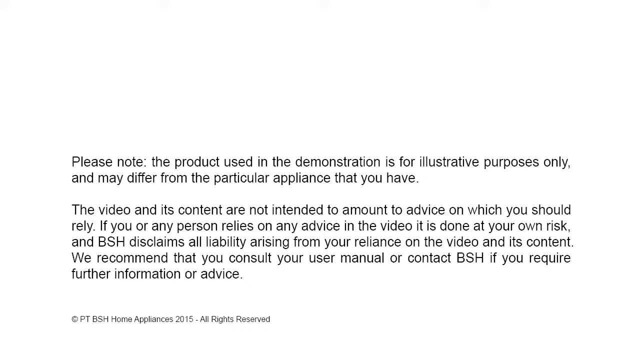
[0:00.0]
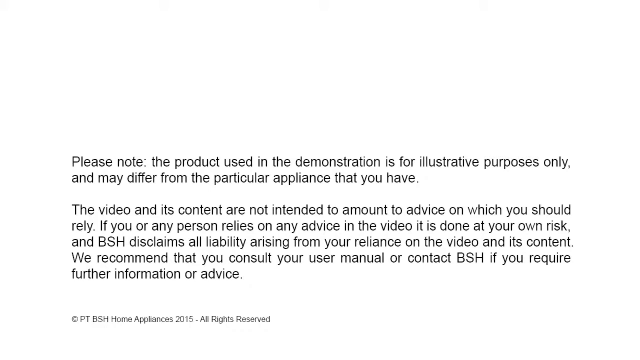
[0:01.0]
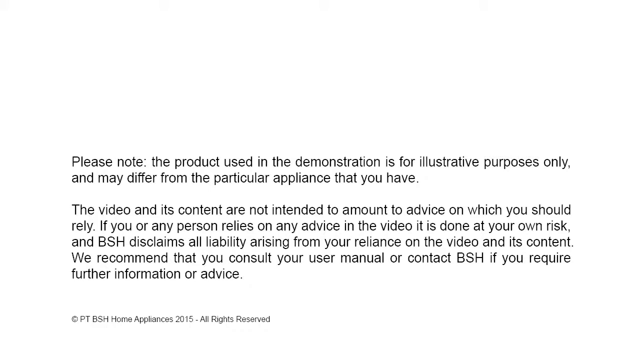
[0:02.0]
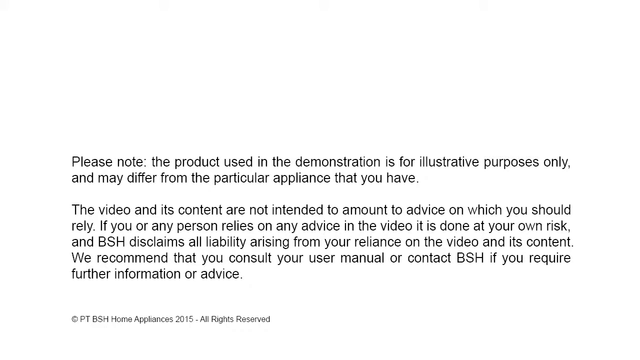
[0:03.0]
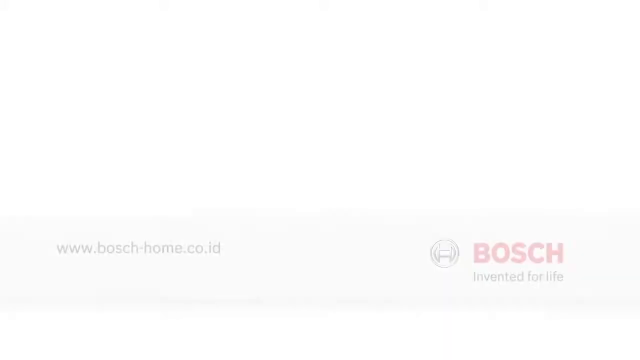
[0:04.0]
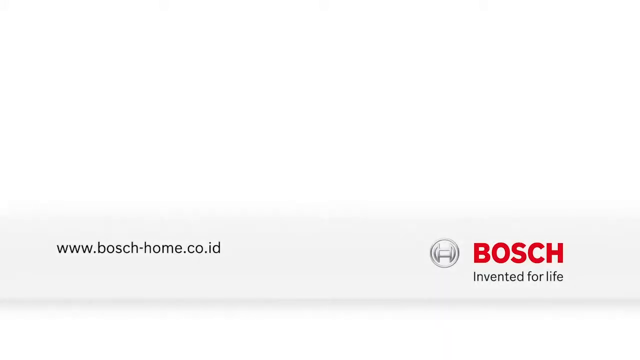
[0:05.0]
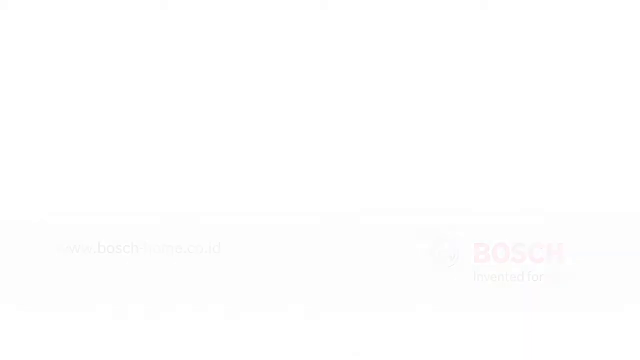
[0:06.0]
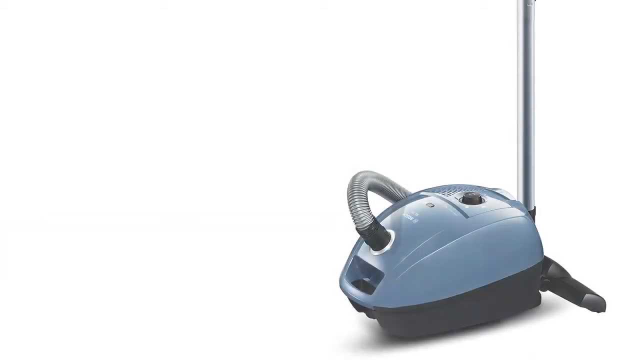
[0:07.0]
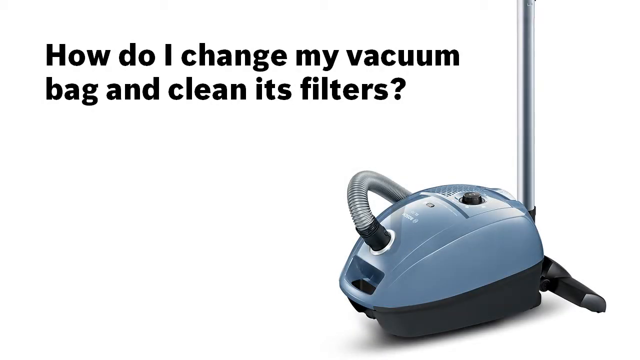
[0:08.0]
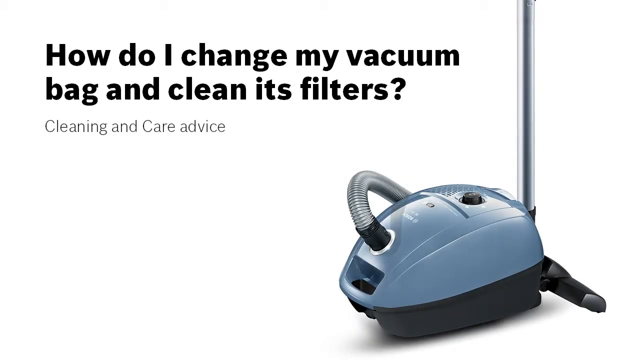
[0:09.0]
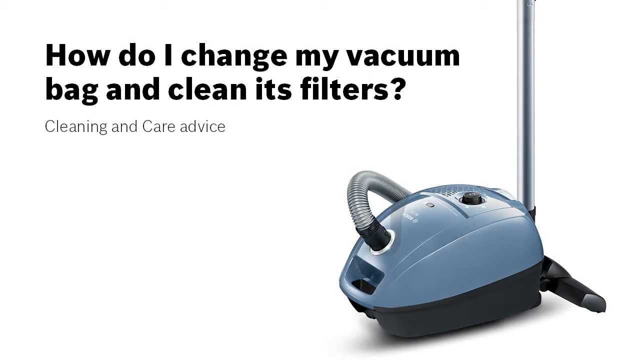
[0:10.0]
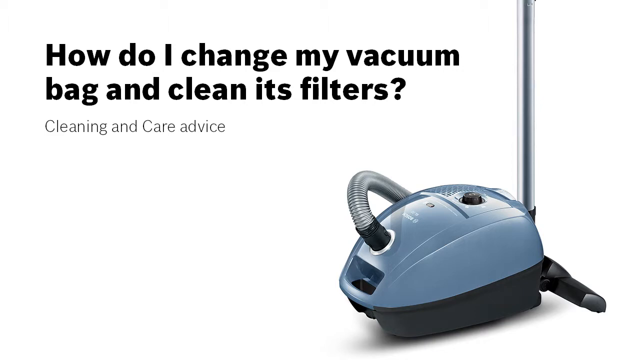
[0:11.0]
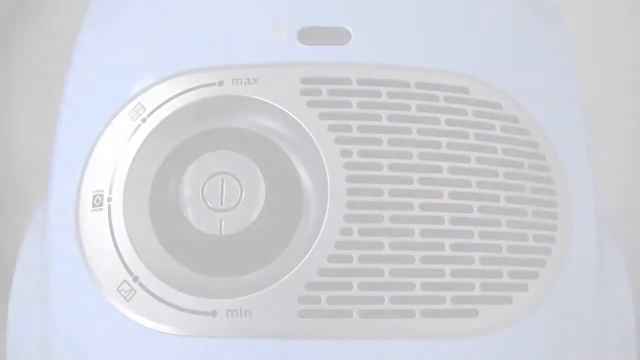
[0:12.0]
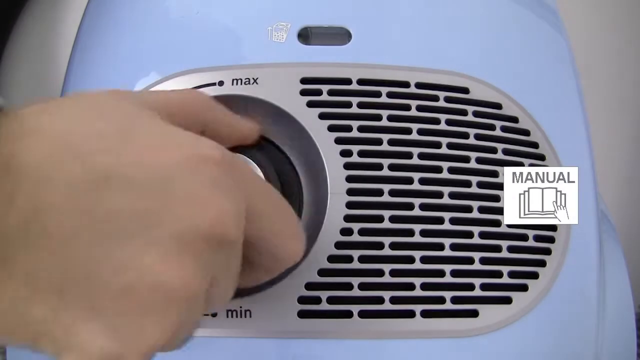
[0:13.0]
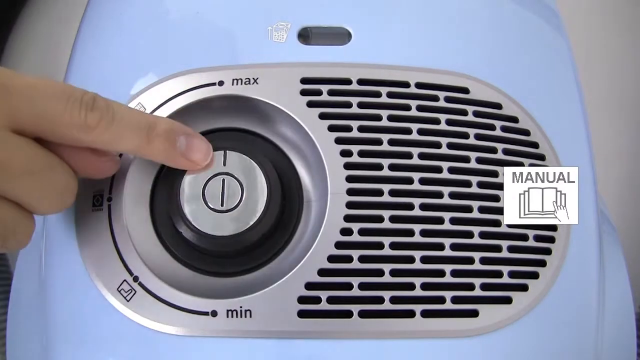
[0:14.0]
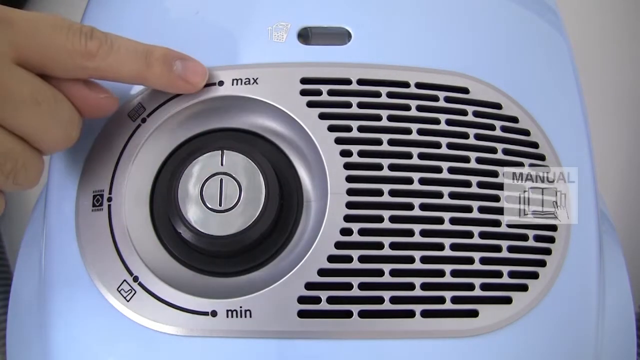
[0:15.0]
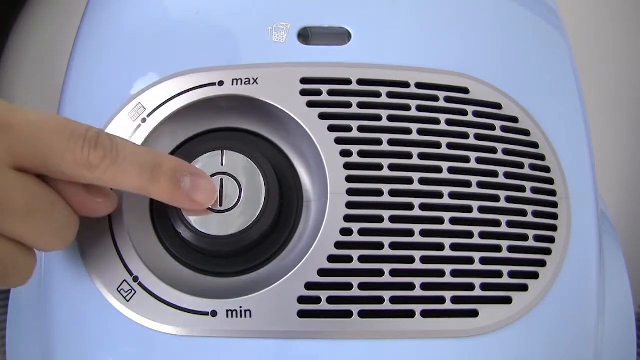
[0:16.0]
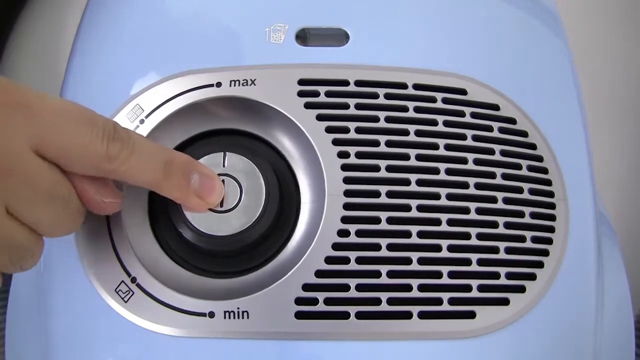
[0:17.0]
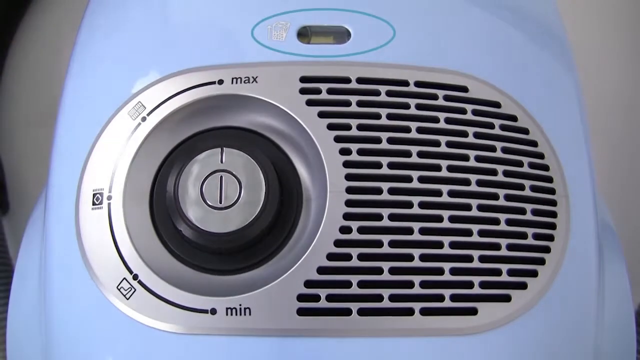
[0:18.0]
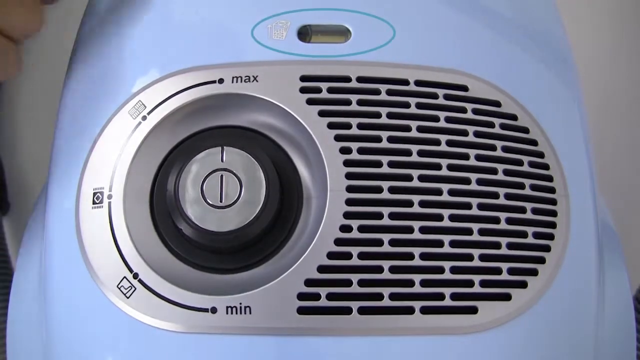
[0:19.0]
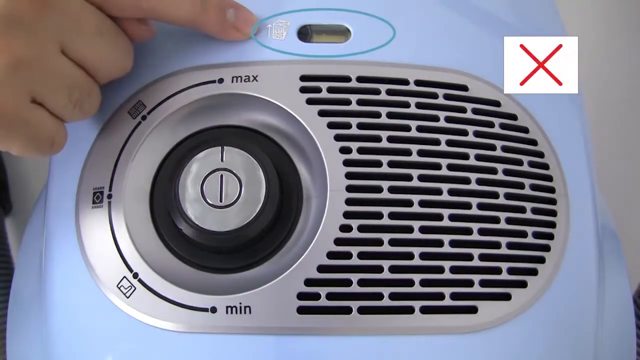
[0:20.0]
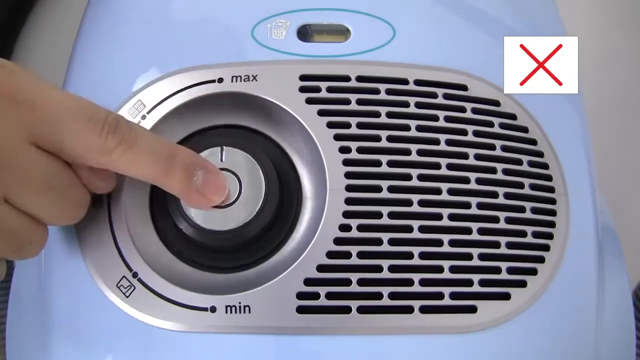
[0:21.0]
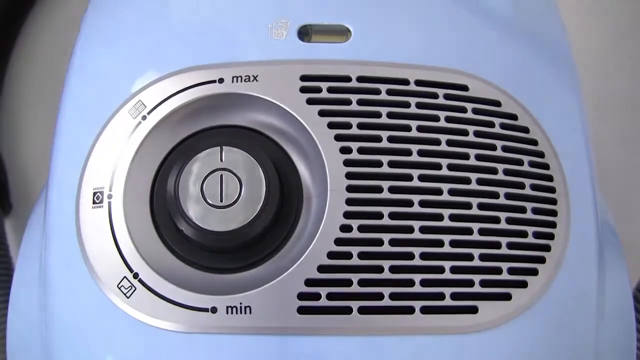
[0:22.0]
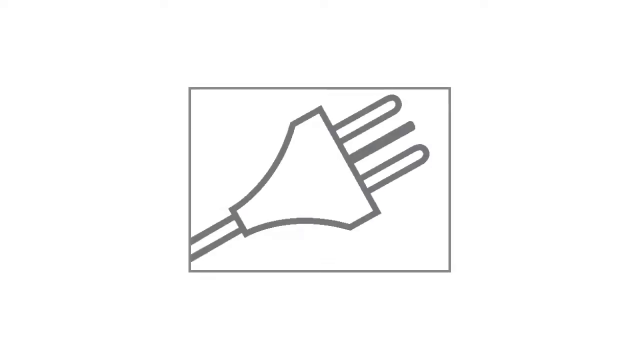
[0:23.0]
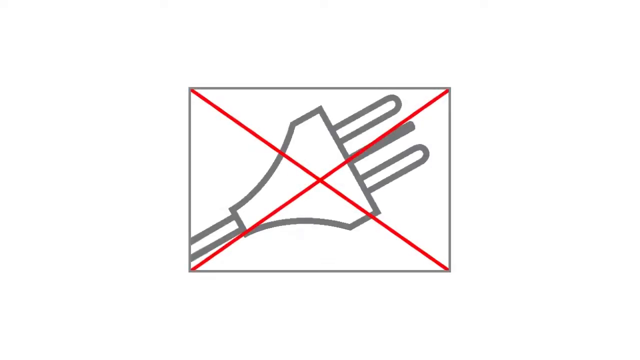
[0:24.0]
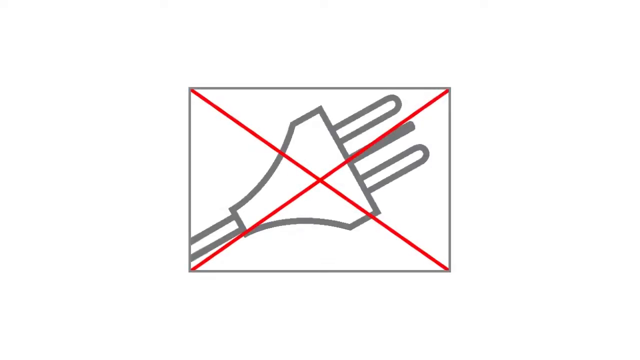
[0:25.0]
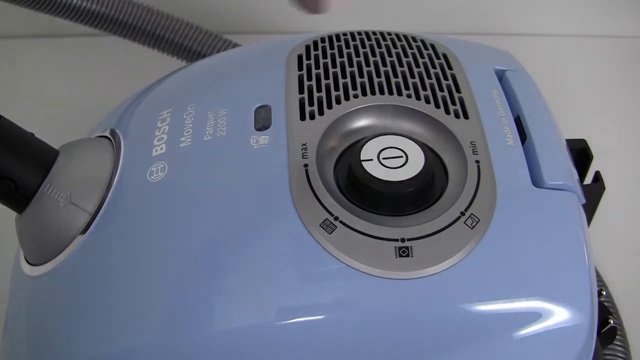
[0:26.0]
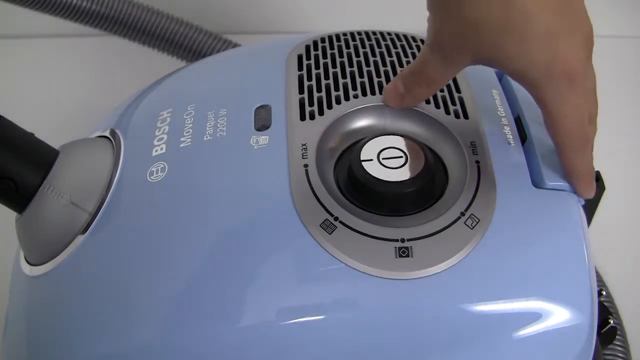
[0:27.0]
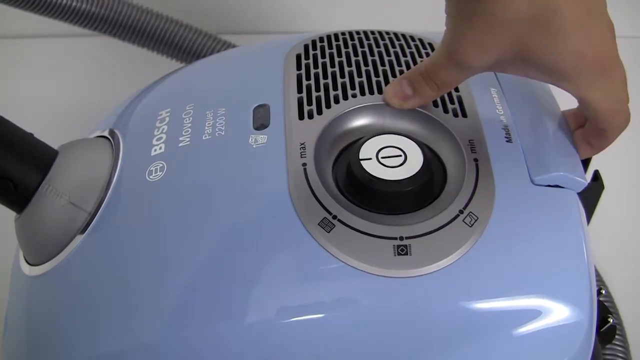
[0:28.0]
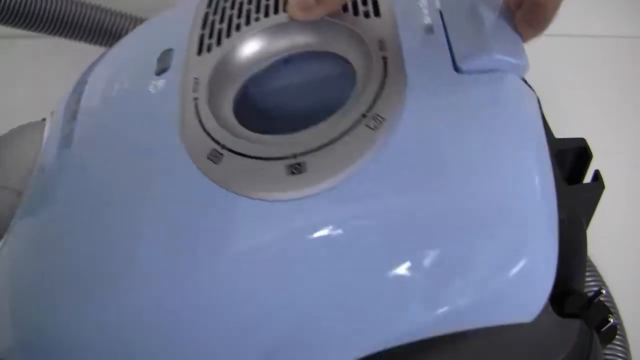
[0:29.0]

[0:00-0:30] The video opens with black text centered on a white background that reads: "Please note the product used in the demonstration is for illustrative purposes only and may differ from the particular appliance that you have. The video and its content are not intended to amount to advice on which you should rely. If you or any person relies on any advice in the video, it is done at your own risk and BSH disclaims all liability arising from your reliance on the video and its content. We recommend that you consult your user manual or contact BSH if you require further information or advice." A transition leads to another page with the website "www.bosch-home.co.id" in the bottom left corner and "BOSCH" in red on the right. Another transition leads to a page showing a blue vacuum, with the title "How do I change my vacuum bag and clean its filters?" and the words "Cleaning and care advice". An individual then turns the knob of a blue vacuum, starting it up.